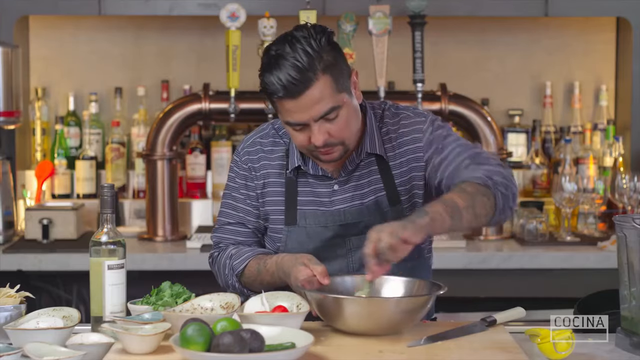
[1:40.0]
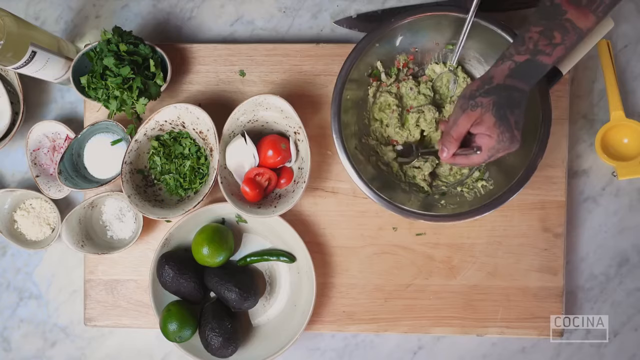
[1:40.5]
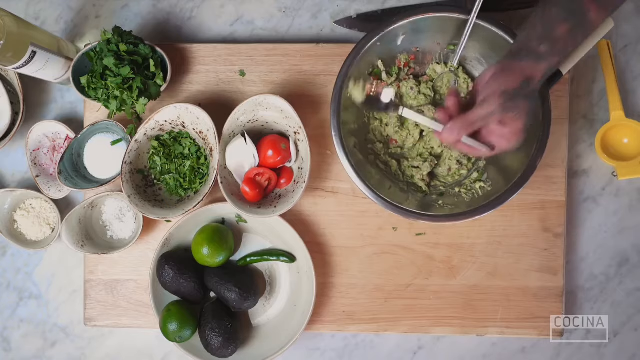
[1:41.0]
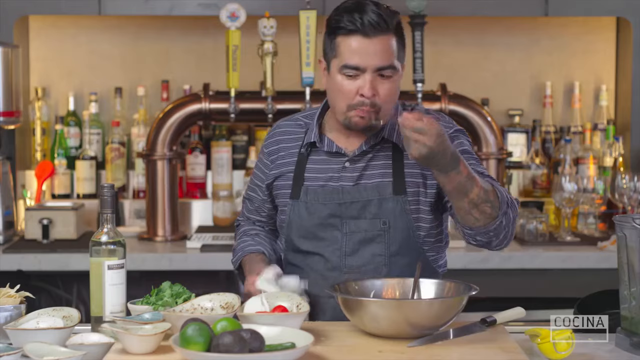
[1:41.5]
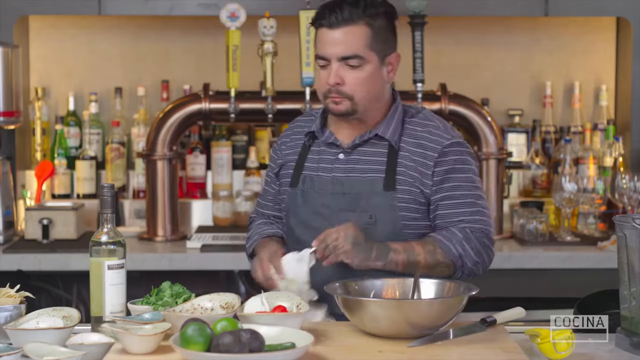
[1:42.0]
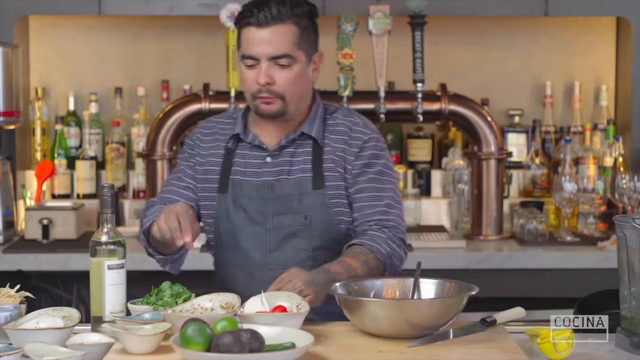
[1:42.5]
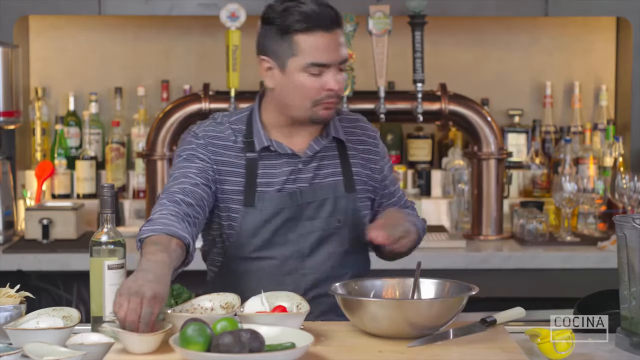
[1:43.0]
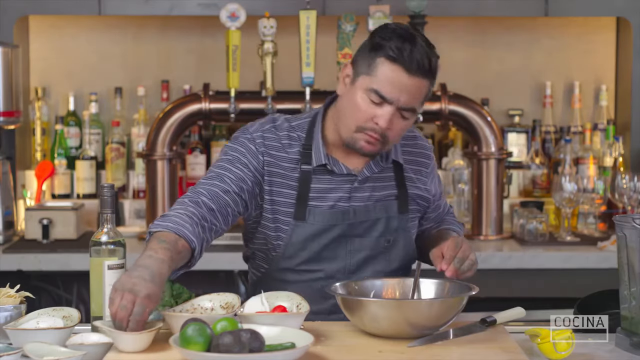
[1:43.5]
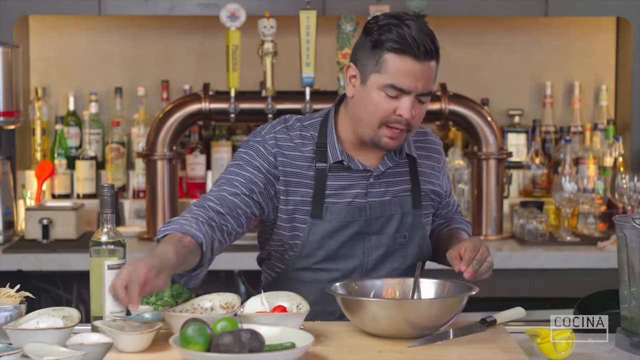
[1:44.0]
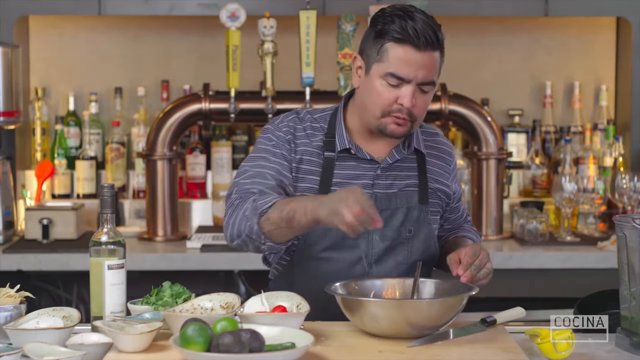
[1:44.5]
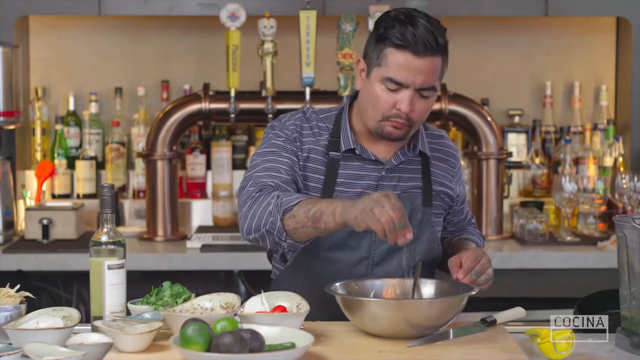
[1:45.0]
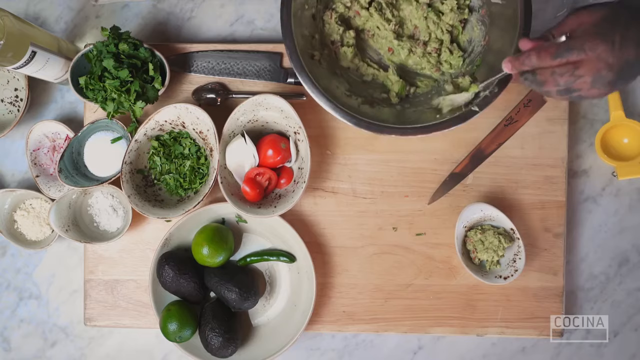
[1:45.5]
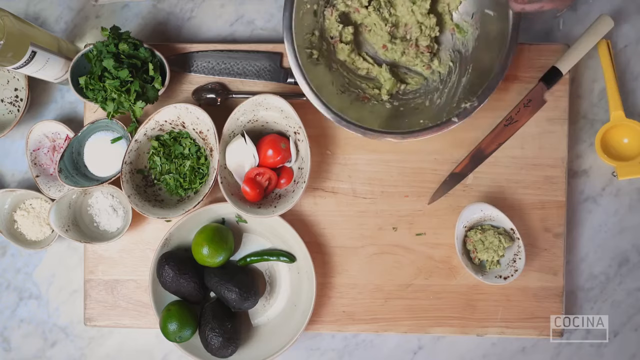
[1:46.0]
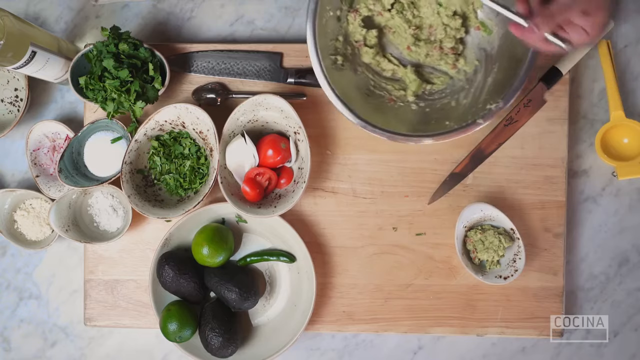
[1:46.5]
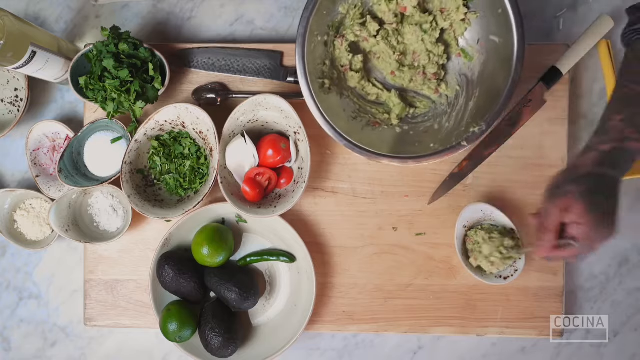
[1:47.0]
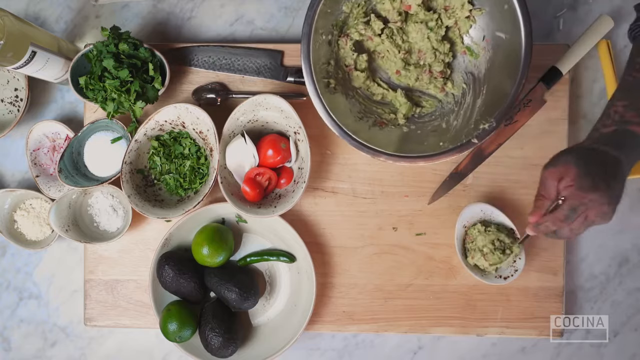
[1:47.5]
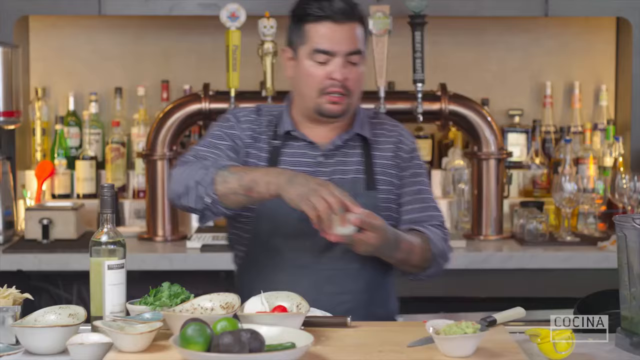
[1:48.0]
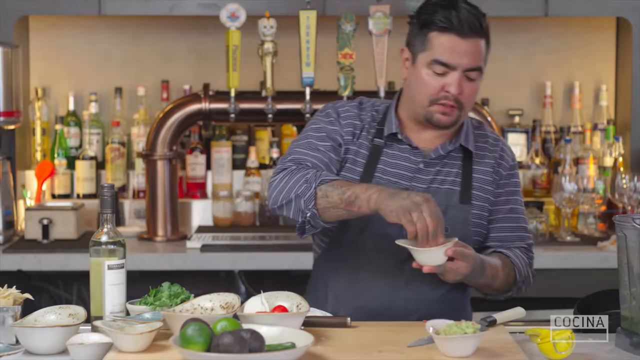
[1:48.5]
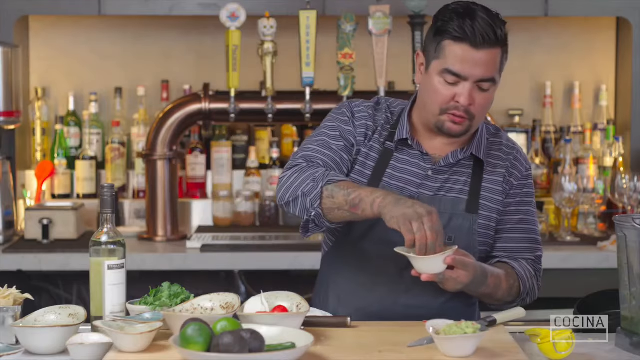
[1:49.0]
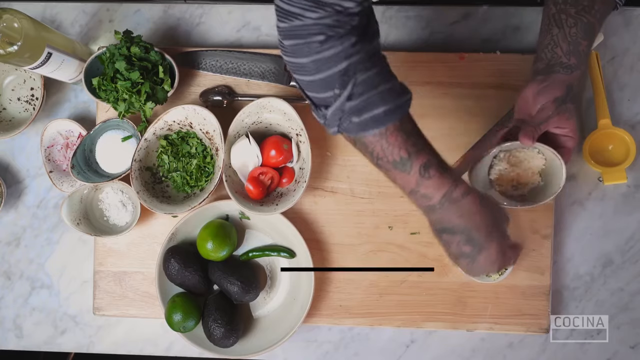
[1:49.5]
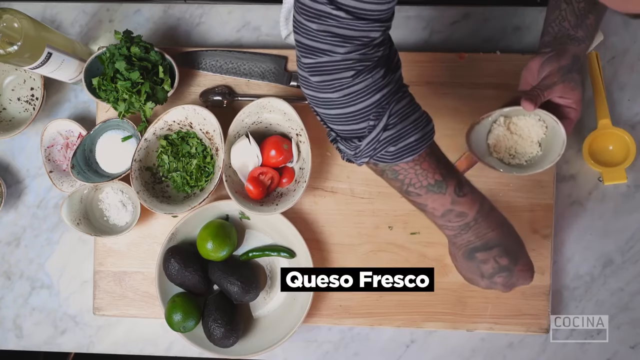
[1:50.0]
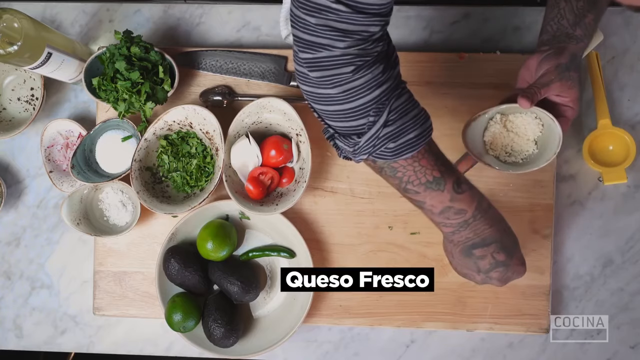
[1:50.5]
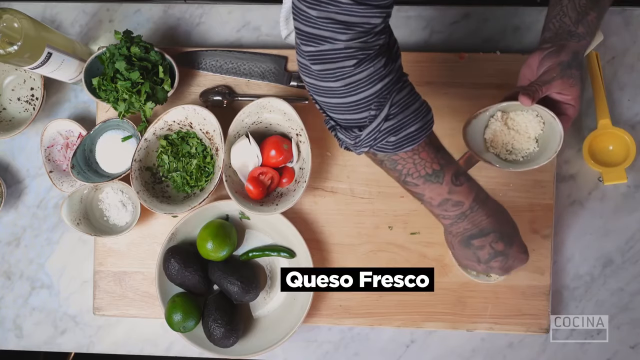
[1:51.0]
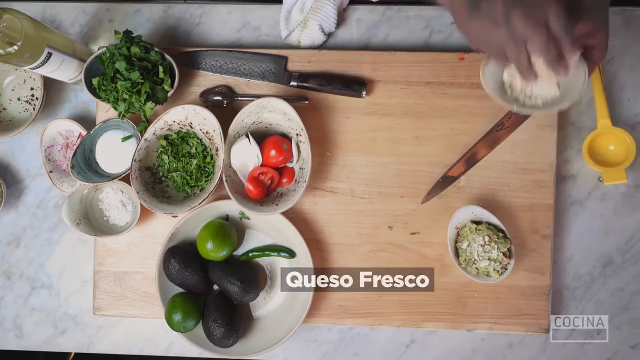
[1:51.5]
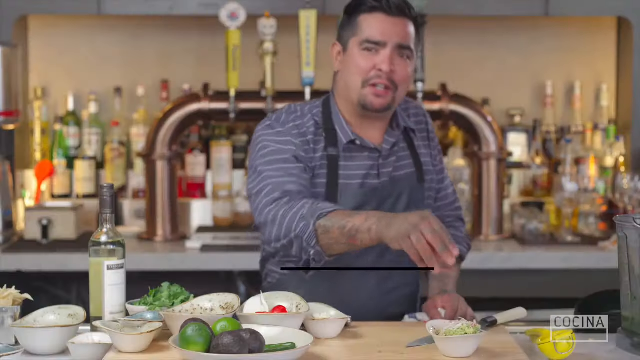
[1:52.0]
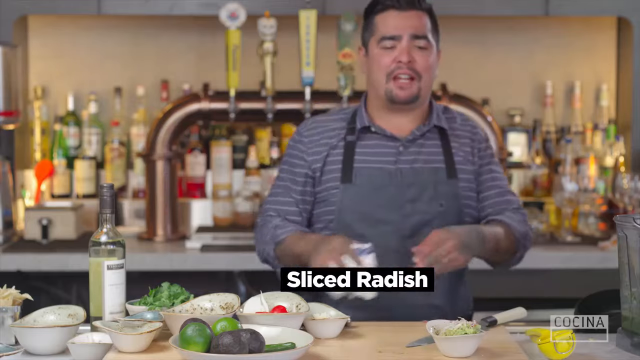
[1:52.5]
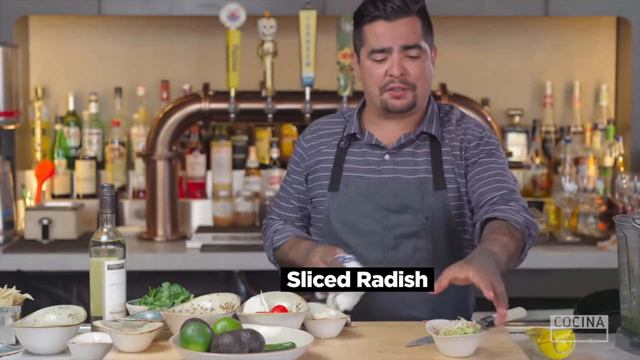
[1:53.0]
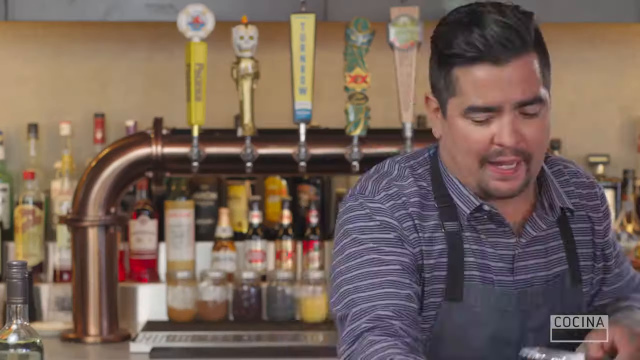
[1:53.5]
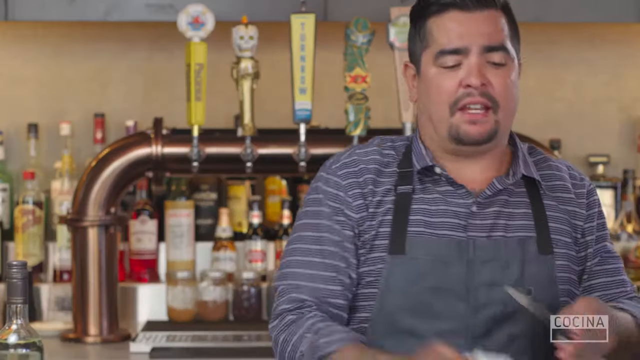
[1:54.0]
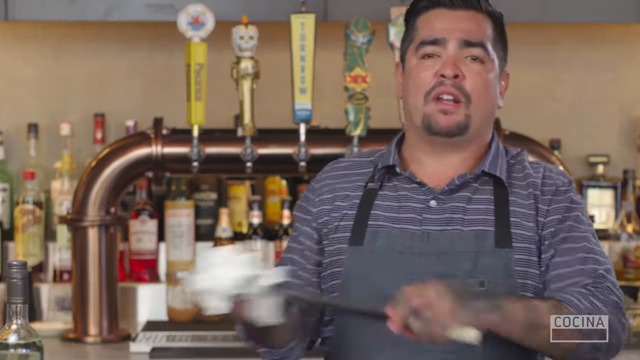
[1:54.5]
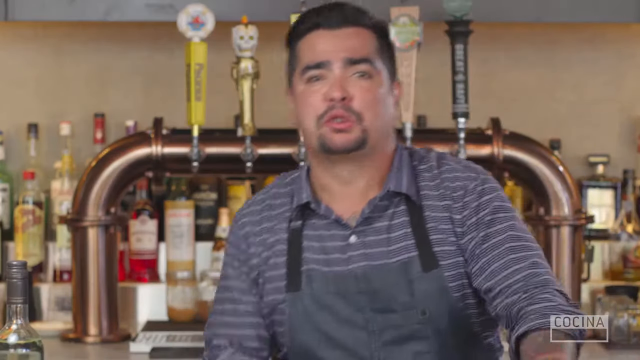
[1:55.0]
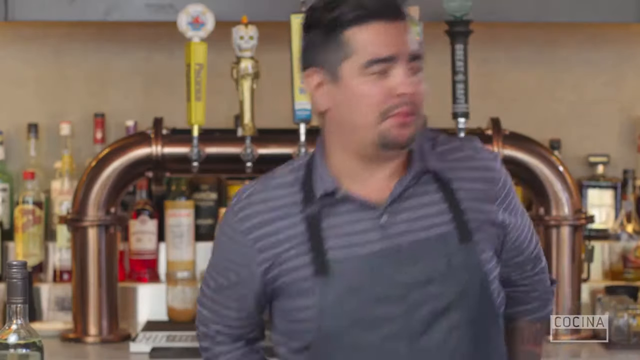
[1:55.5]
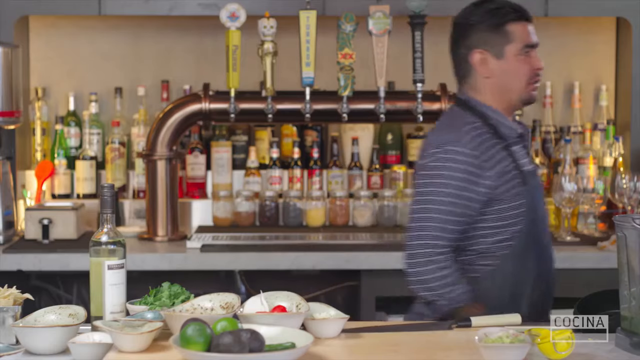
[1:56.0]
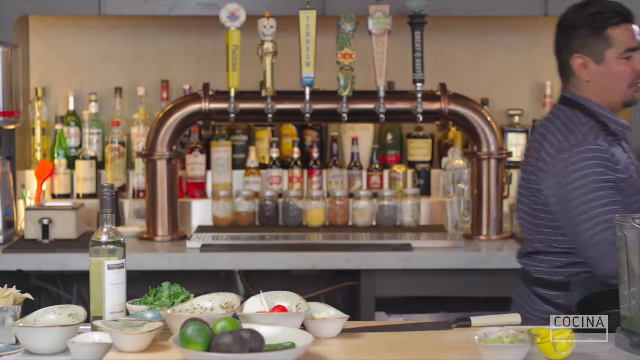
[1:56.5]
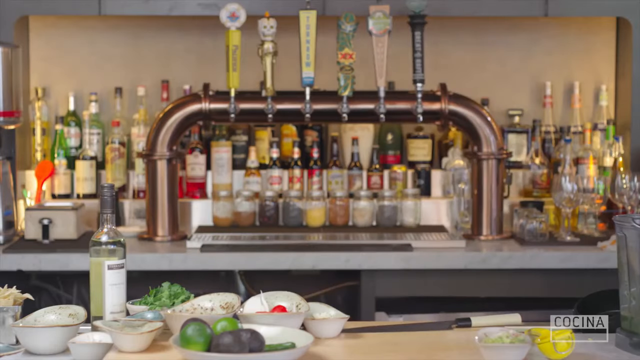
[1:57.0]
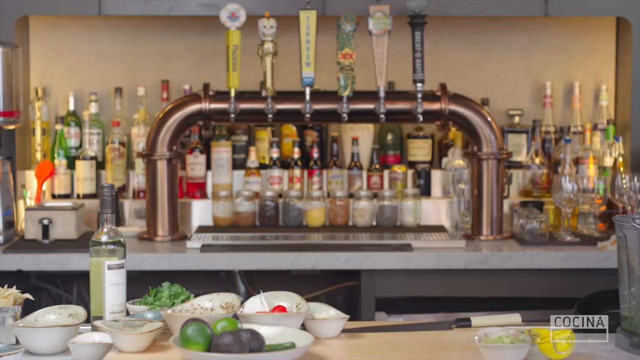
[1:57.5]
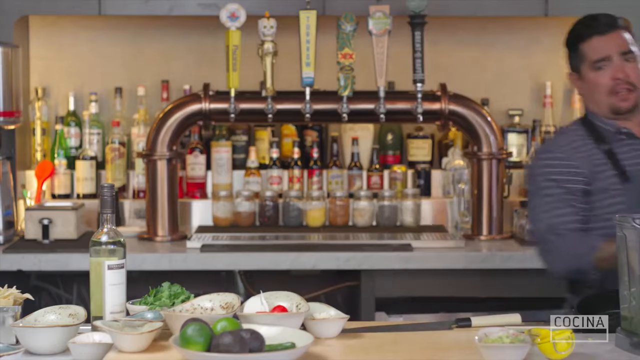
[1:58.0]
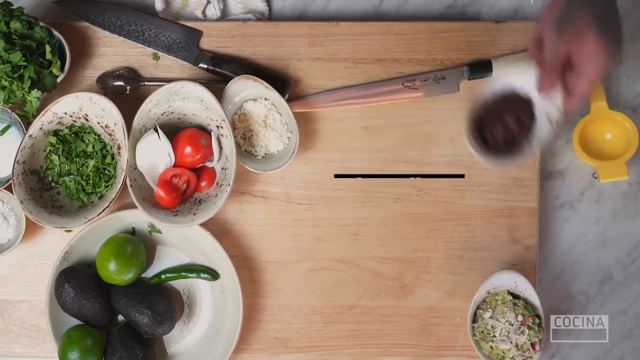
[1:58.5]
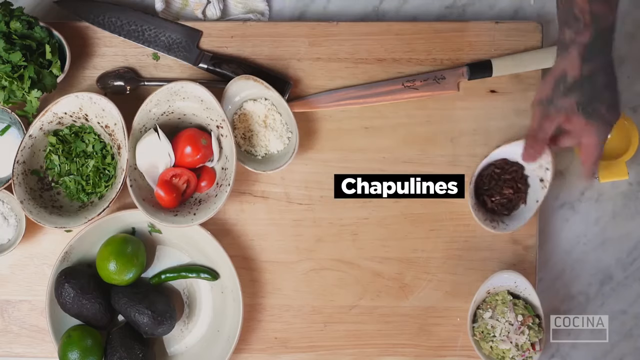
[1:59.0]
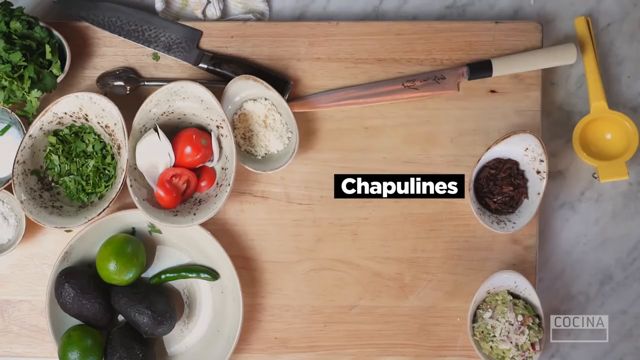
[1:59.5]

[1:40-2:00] A Mexican man with black hair, a mustache and a beard wears a blue shirt with white stripes and a blue apron, with his sleeves rolled up to his elbows showing tattoos on his forearms. Many liquor bottles are in the background, and in the foreground is a table with many ingredients and a silver bowl in front of him. Holding a silver spoon in his left hand and the silver bowl in his right, he appears to be mixing something. From a top-down view, he takes a little of the green avocado from the bowl with the spoon and tastes it. He talks a little, then takes a pinch of salt and spreads it in the bowl. With the spoon in his left hand, he transfers the avocado or guacamole into a smaller bowl and sprinkles more white powder on top. White text at the bottom reads "queso fresco", with another line of white text underneath reading "sliced radish". The man talks more, wipes off his knife and walks off to the right, then brings in another little bowl of ingredients. In a top-down view, white text reads "chapulines".